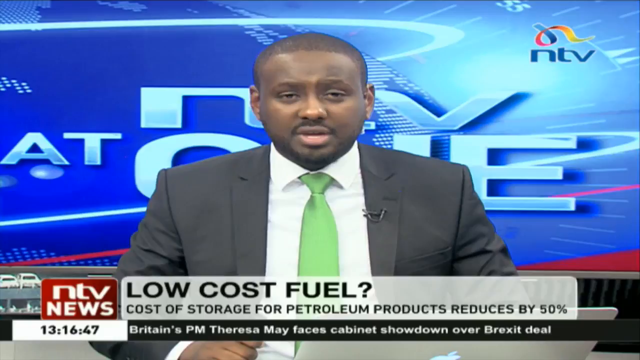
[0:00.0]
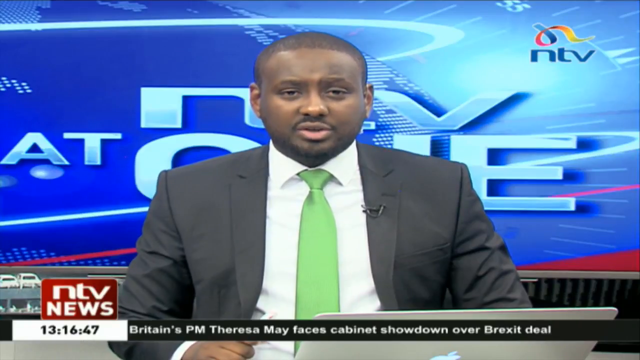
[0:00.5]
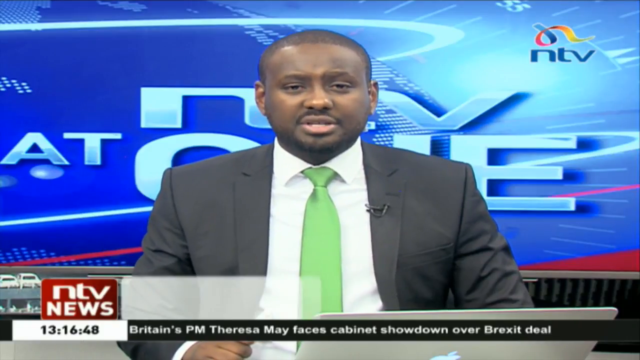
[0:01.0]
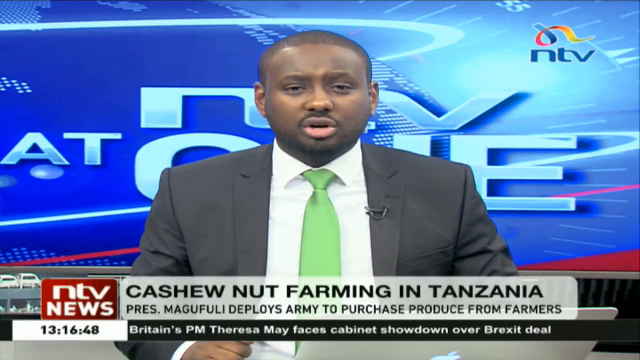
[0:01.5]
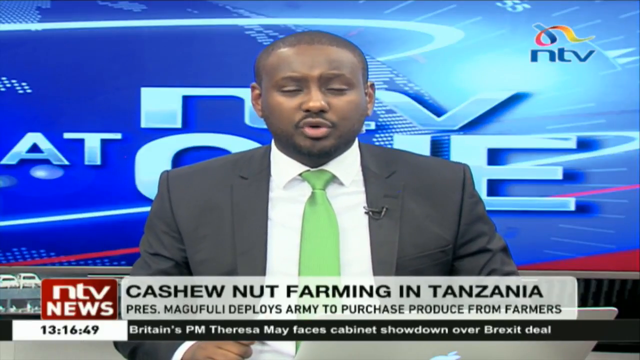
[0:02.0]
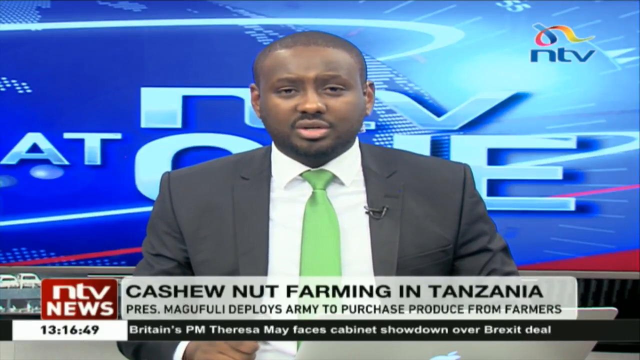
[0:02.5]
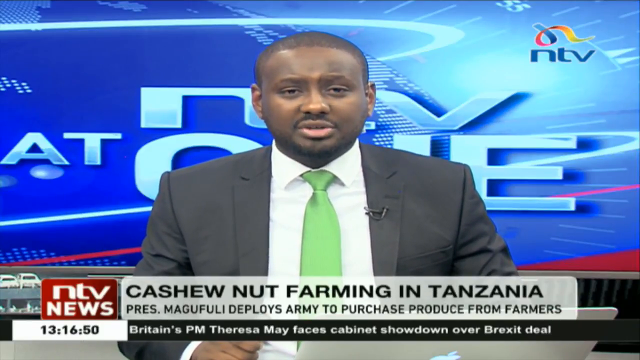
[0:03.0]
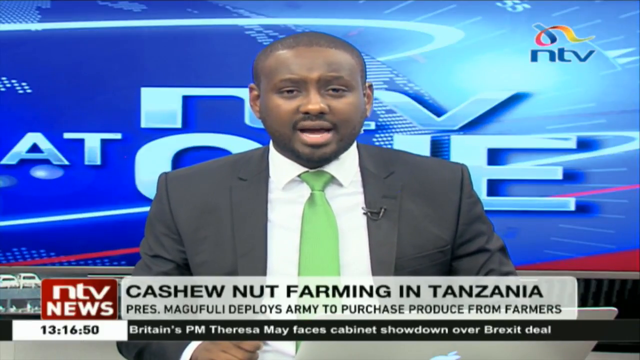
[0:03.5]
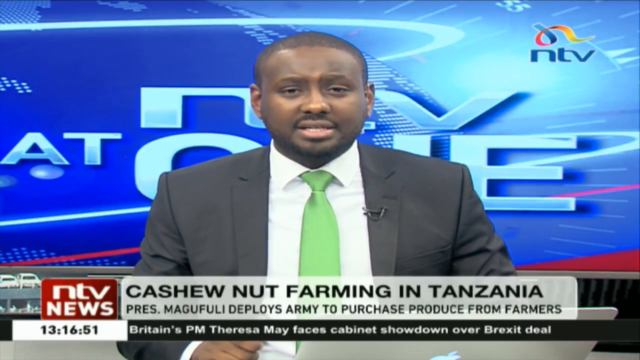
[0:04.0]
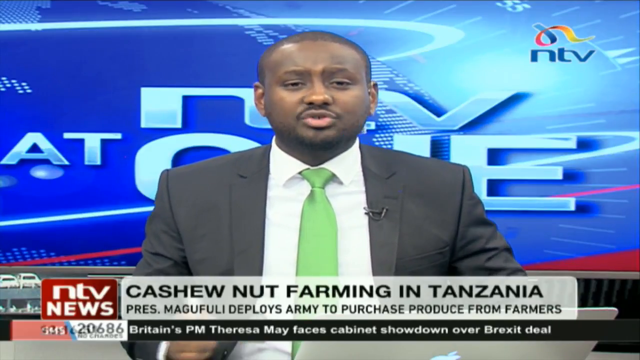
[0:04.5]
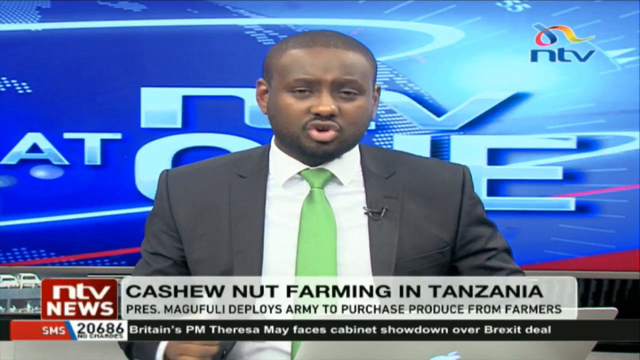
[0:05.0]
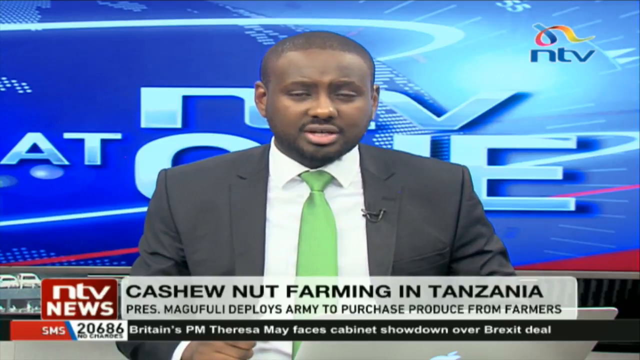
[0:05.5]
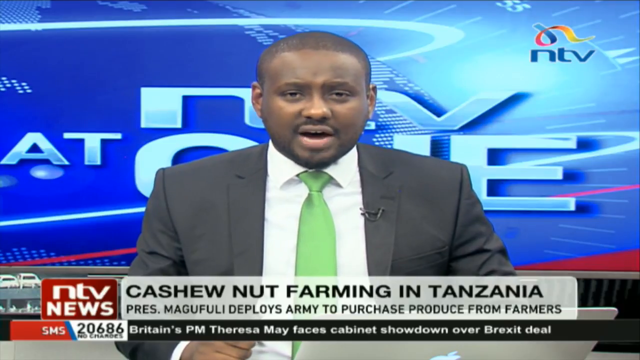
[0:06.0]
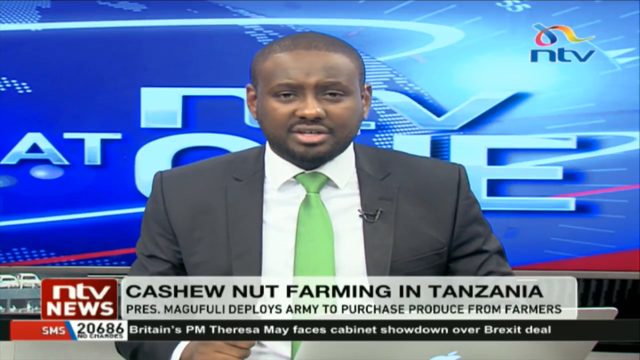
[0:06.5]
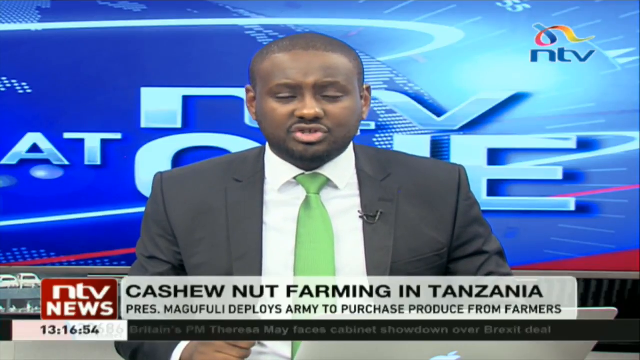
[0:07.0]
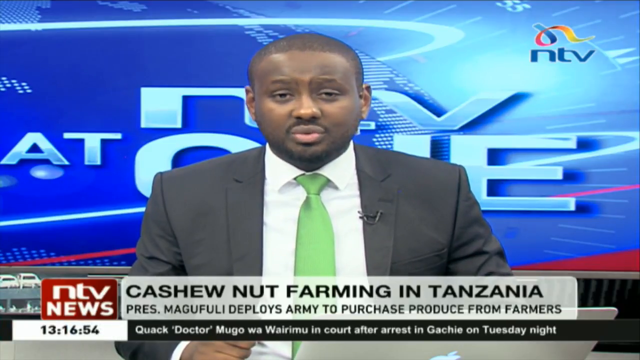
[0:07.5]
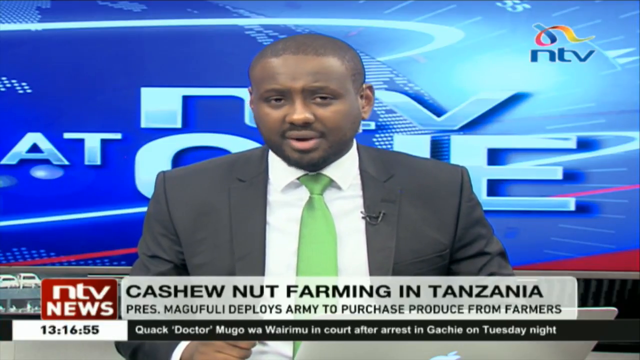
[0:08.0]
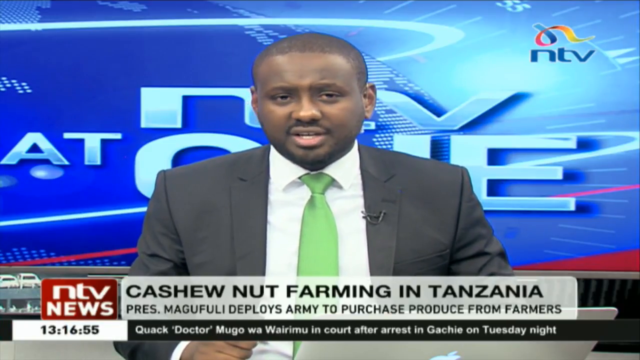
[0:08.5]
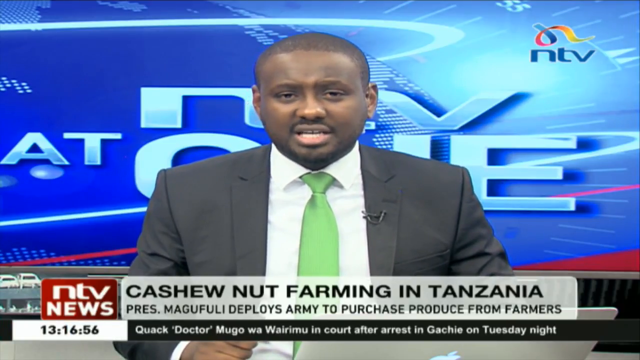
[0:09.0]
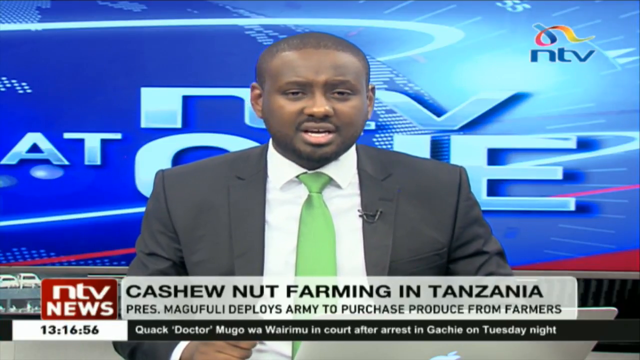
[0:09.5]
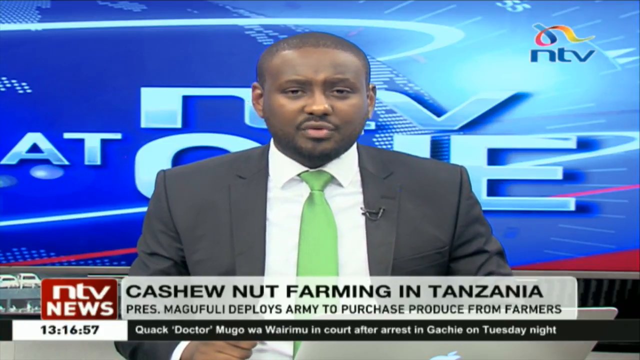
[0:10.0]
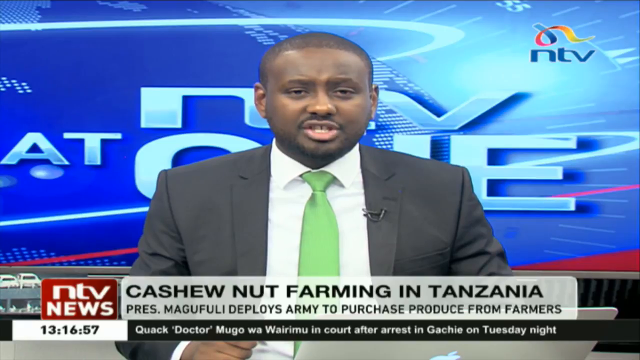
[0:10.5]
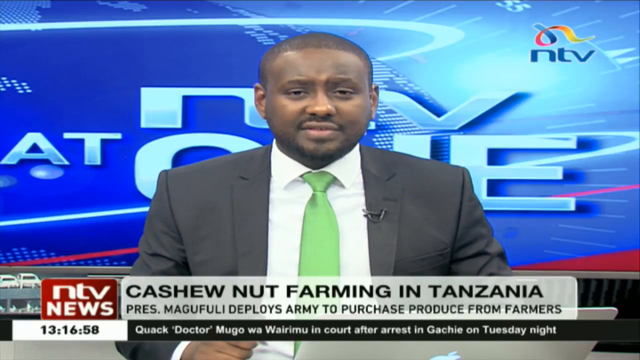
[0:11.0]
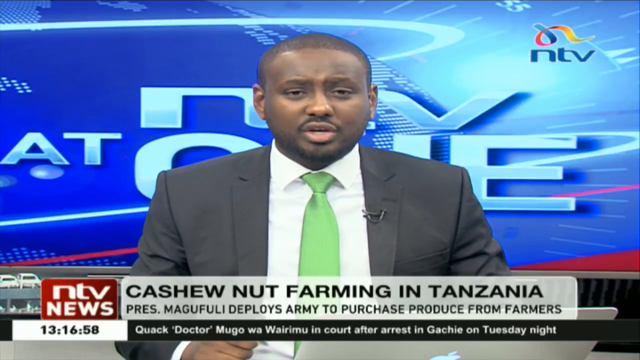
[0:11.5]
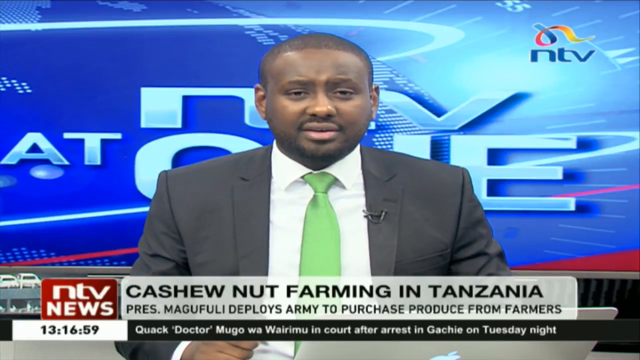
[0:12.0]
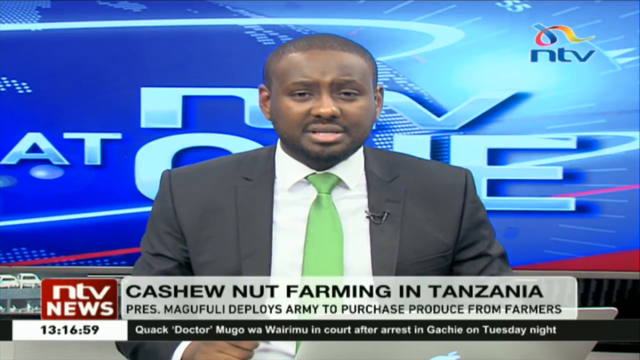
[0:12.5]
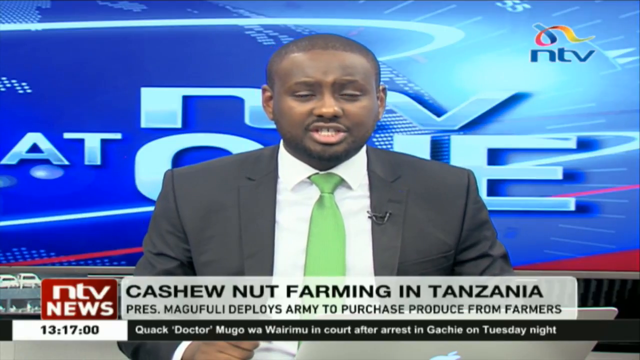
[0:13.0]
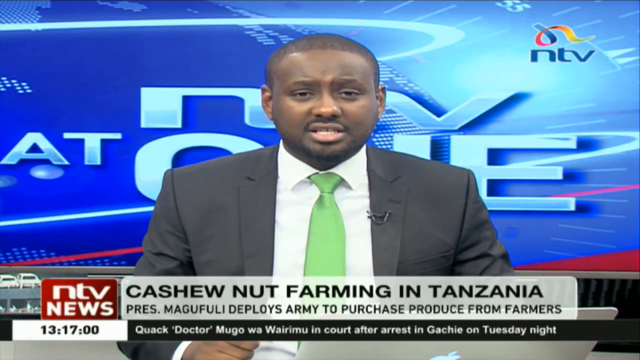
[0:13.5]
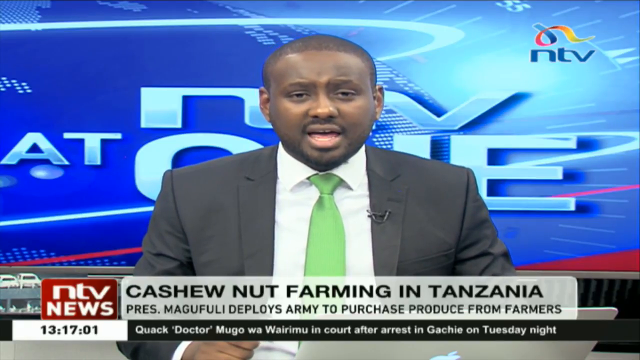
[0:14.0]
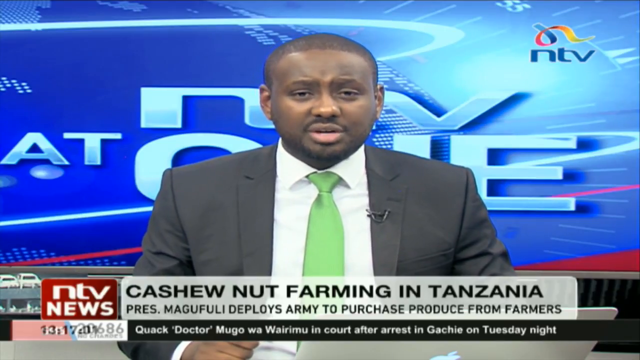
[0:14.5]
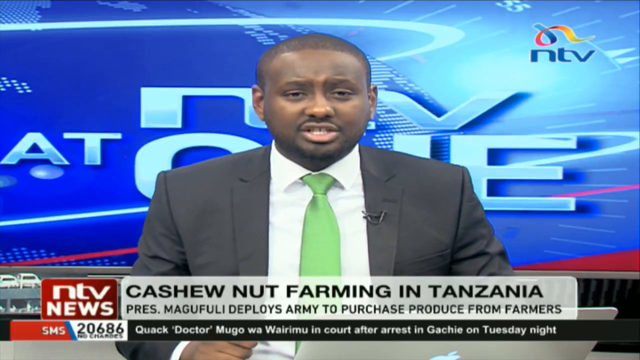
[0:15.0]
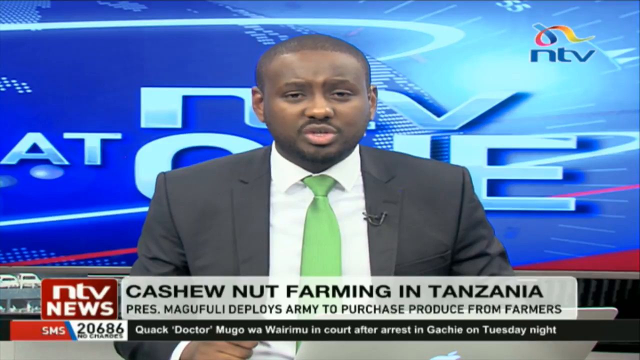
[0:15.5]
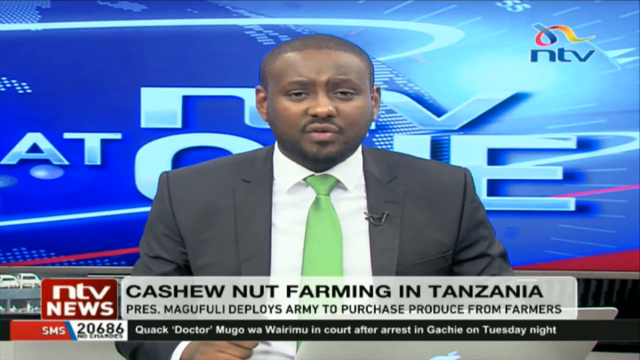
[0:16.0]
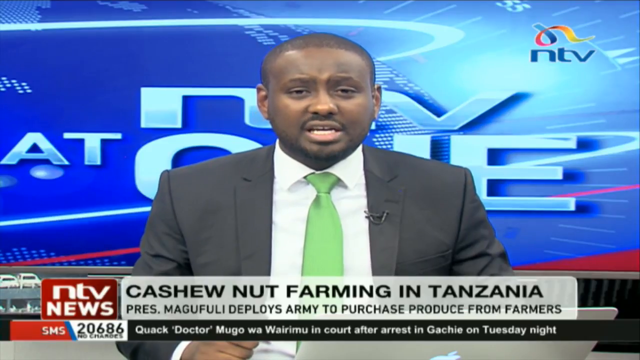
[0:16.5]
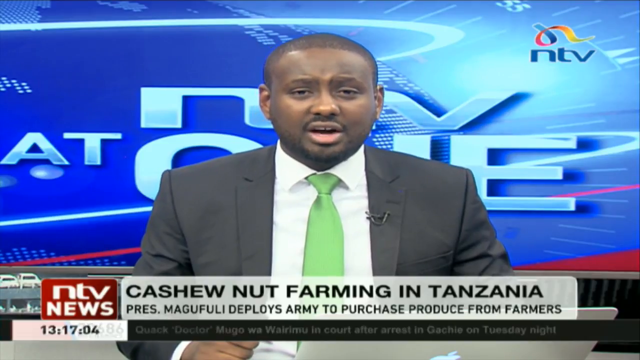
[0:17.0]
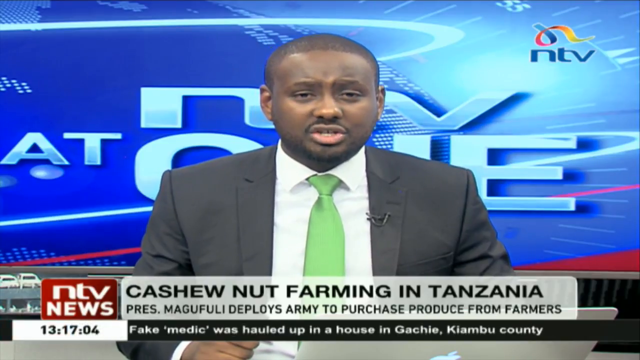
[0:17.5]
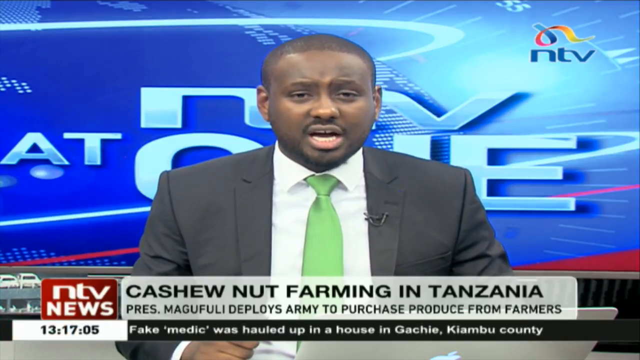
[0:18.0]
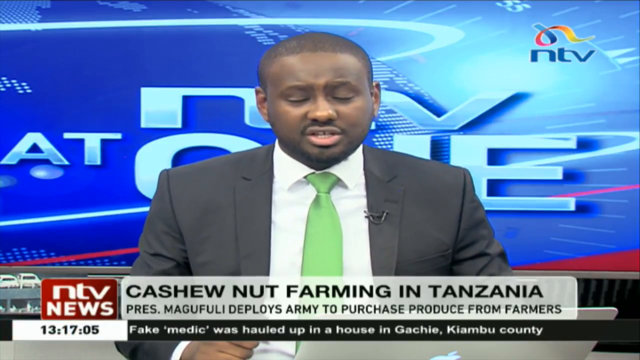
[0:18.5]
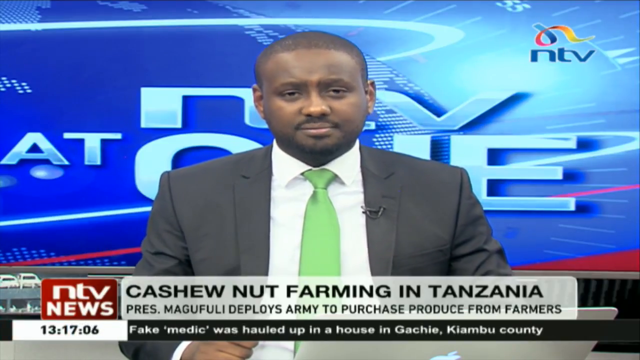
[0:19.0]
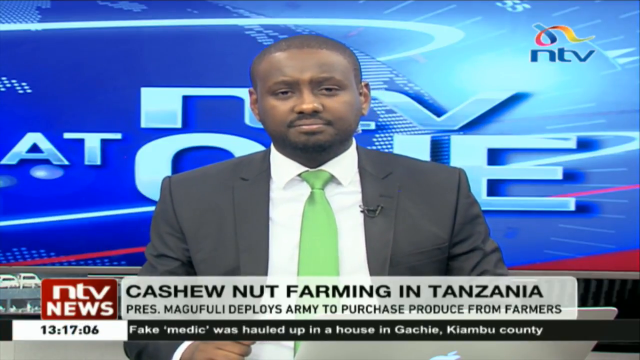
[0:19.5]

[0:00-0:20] A news broadcast from NTV News shows a male news broadcaster wearing a black suit, a white shirt and a green tie. The news headline is about cashew nut farming in Tanzania and says that President Magufuli deploys army to purchase produce from farmers. Another item about low fuel cost says that the cost of storage for petroleum products has reduced by 50 percent.